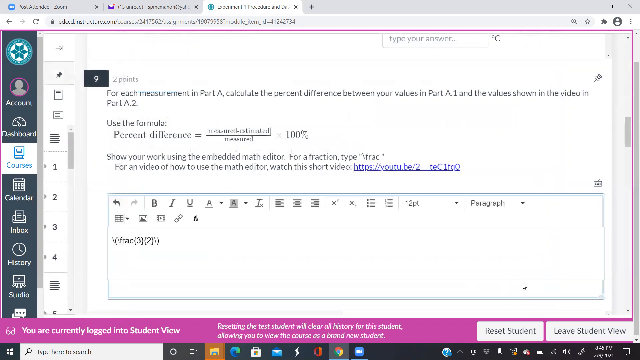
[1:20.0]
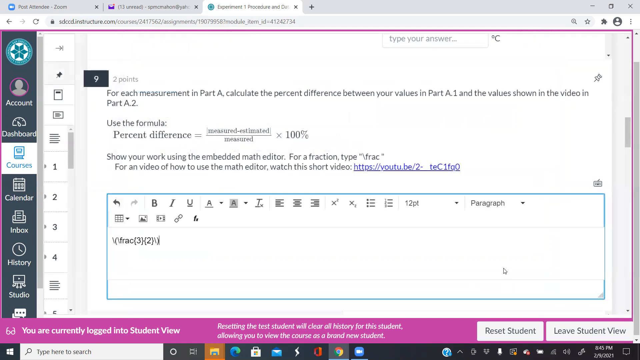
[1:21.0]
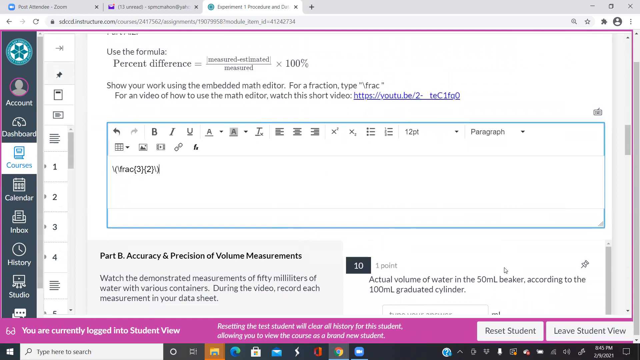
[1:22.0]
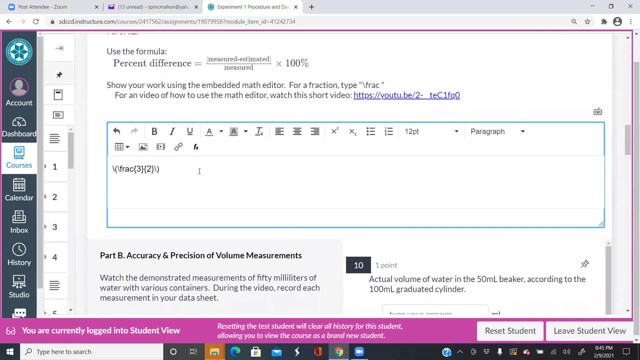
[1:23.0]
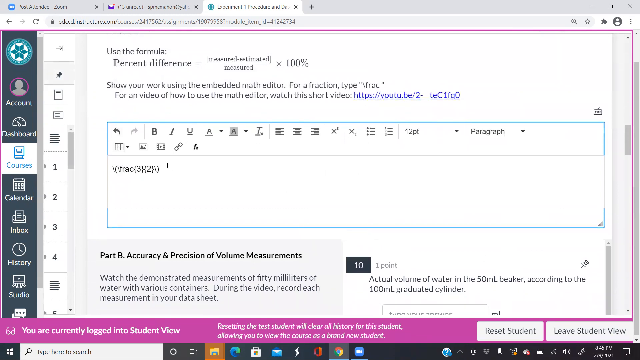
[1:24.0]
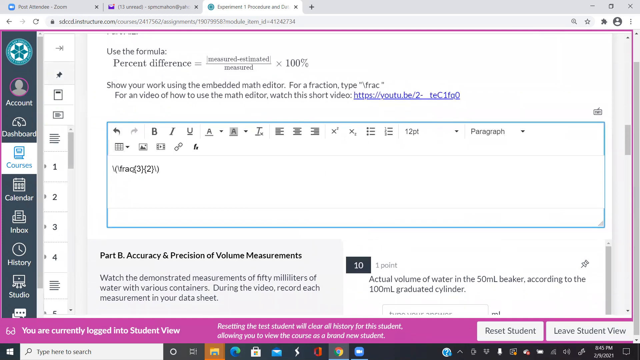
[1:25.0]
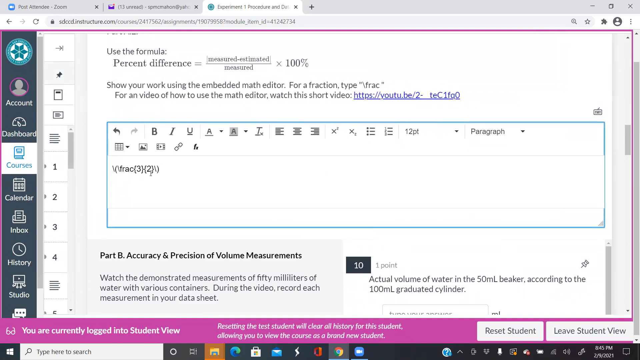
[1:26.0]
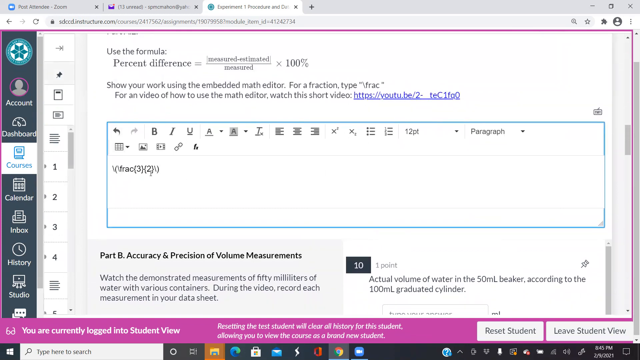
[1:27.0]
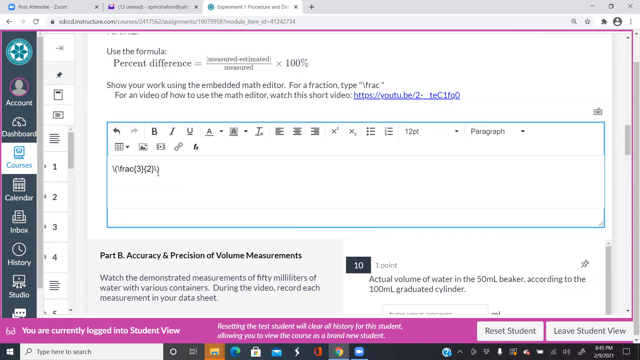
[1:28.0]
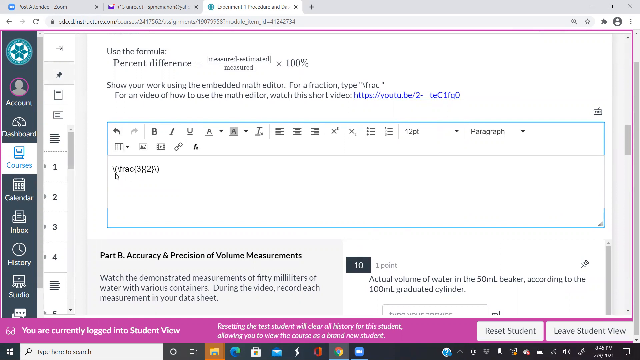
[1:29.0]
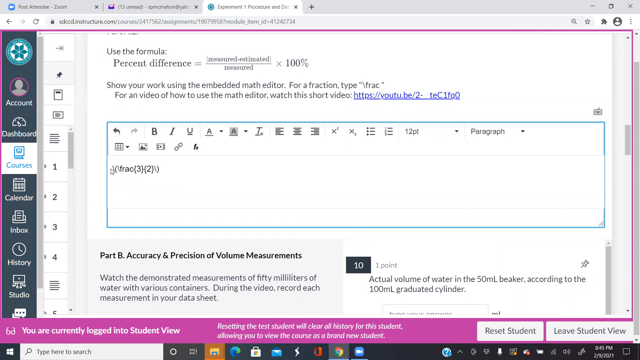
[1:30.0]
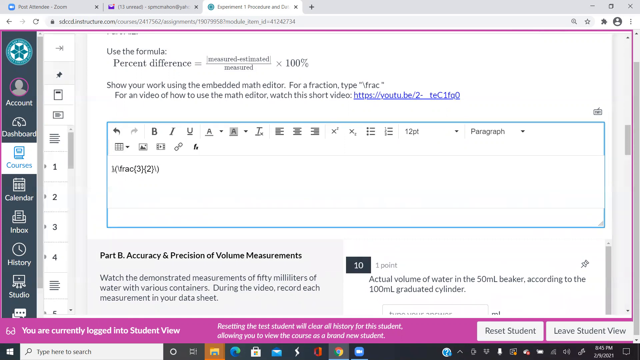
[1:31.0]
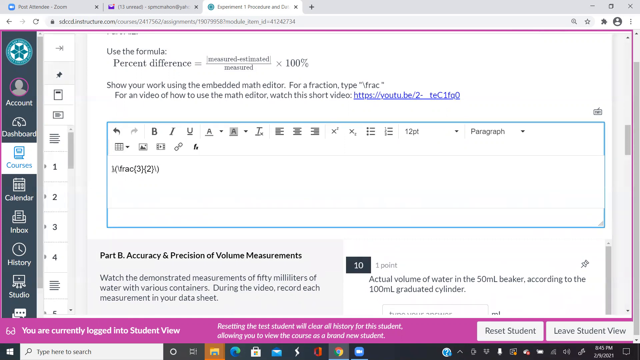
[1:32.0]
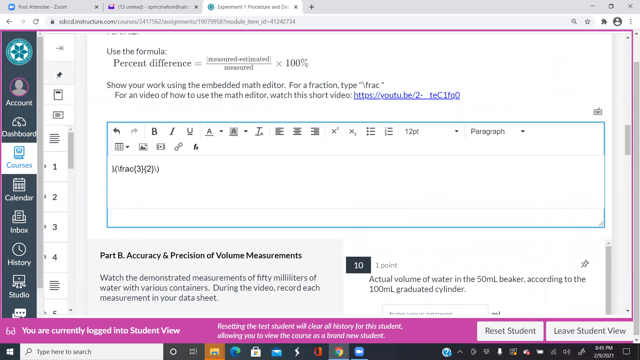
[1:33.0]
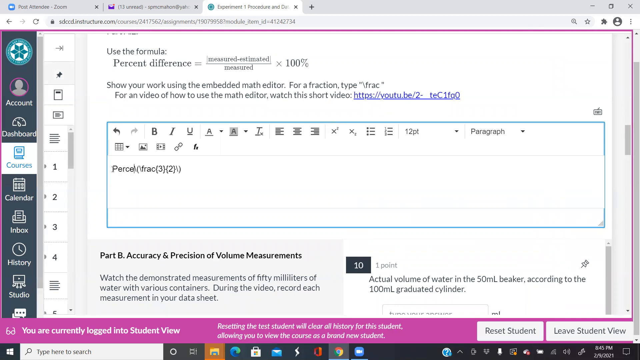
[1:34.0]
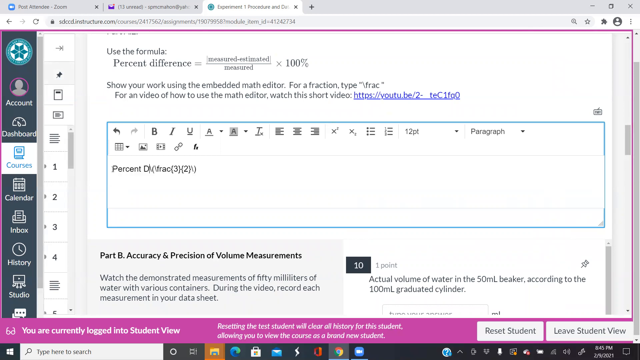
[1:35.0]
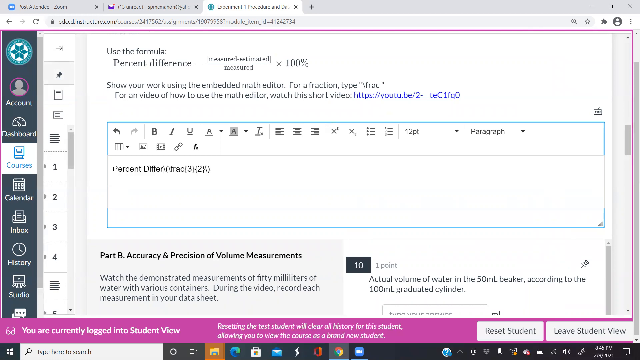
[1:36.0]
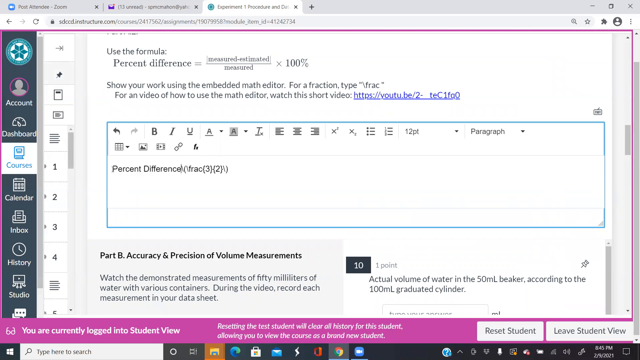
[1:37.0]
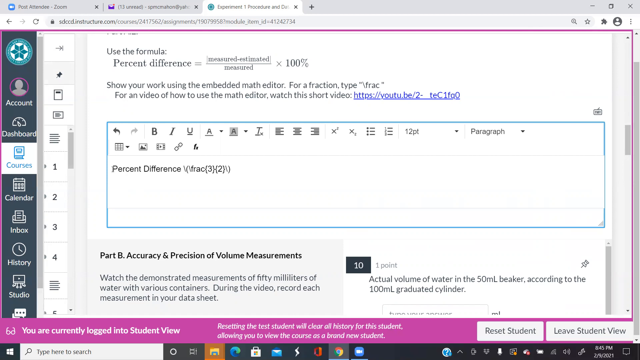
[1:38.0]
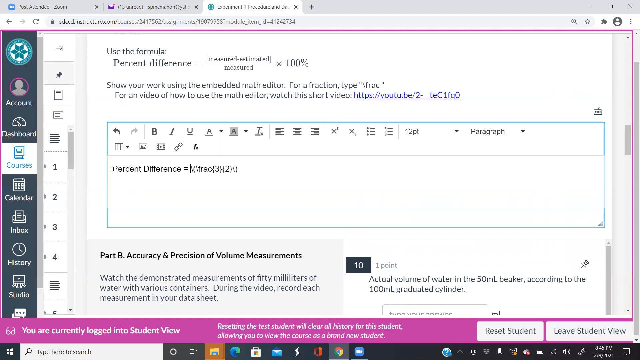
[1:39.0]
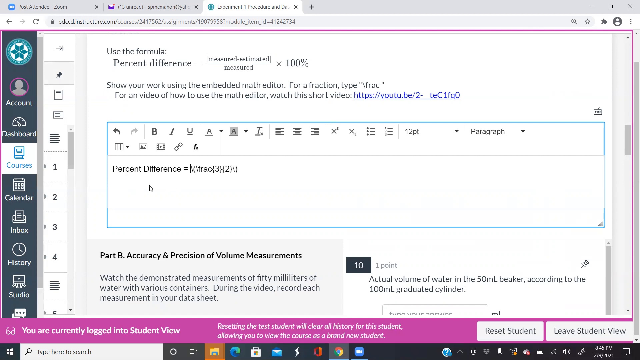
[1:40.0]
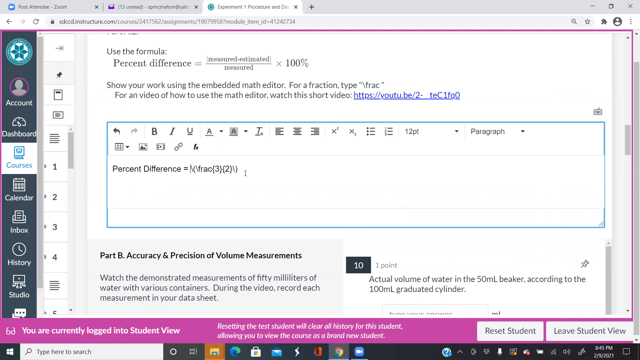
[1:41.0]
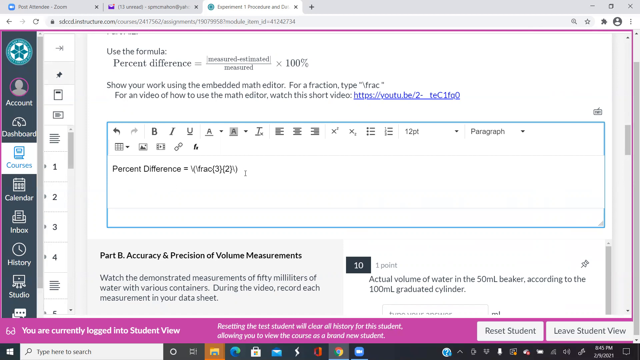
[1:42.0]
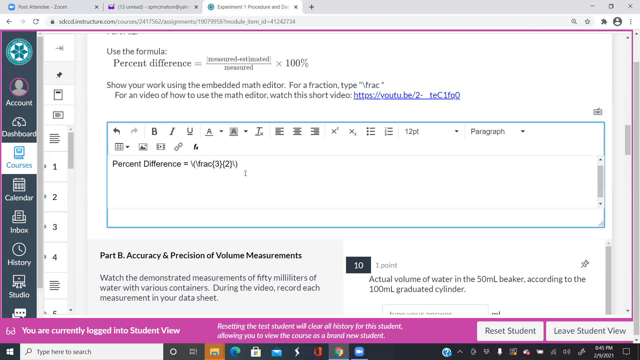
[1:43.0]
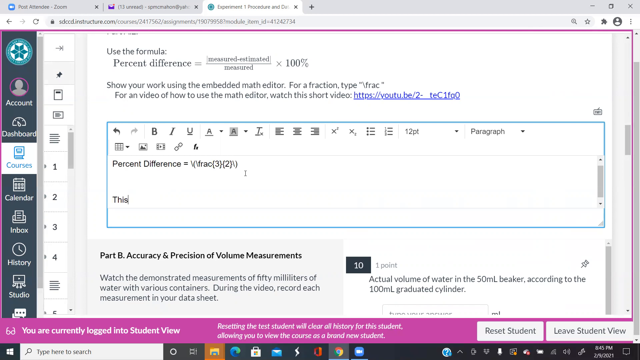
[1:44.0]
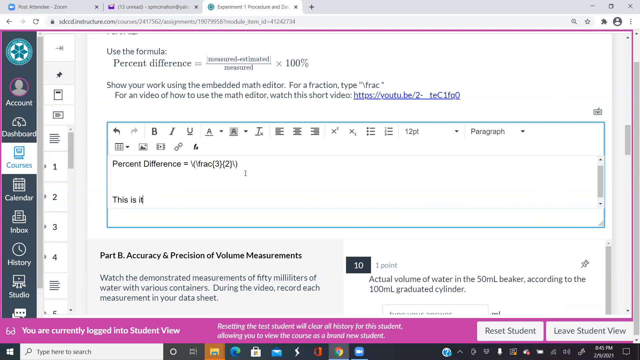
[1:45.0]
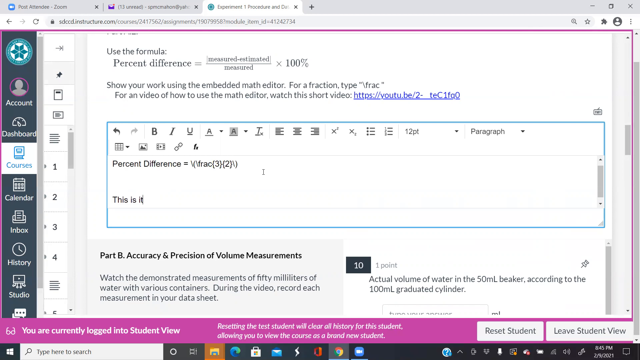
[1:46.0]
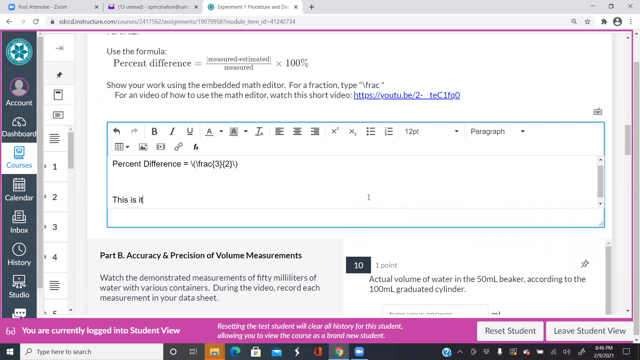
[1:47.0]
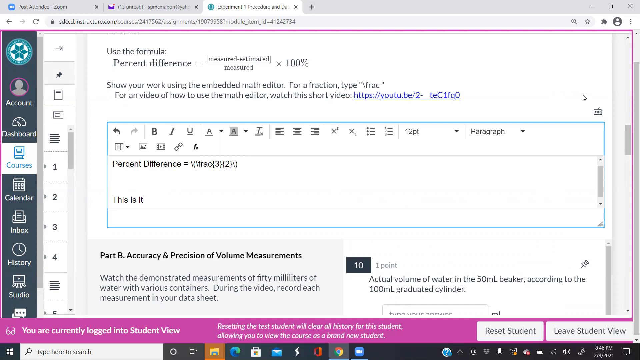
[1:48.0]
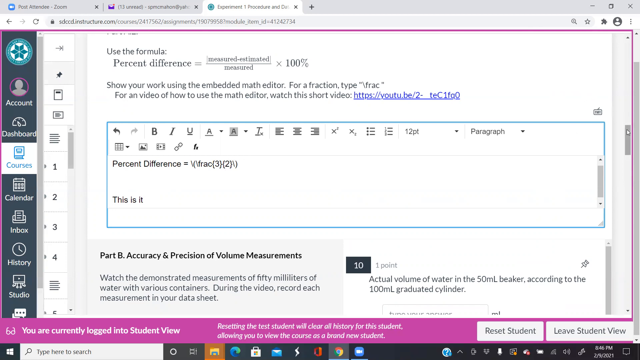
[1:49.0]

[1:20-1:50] A data sheet for "Experiment 1" is shown in student view, with part A, "Estimates", and questions for the student to answer. On the left are sections labelled Account, Dashboard, Courses, Calendar, Studio, History and Inbox. The student uses the mouse to scroll down, the arrow moving down, to a question about percent difference and clicks on the blank space to answer it. They type their answer using fractions with the MathQuill toolbar and also type "this is it". They then scroll up with the mouse, come back down and submit the assignment. A pop-up message appears asking whether they have answered all of the questions and are sure they want to submit.